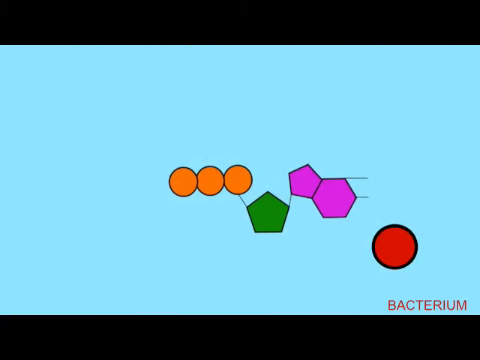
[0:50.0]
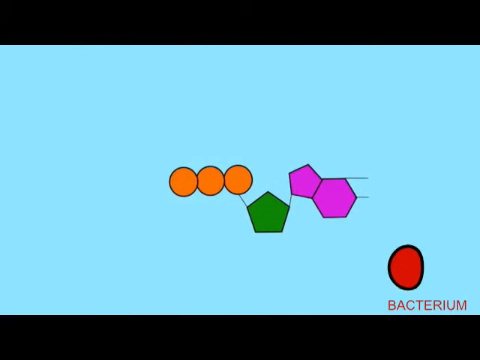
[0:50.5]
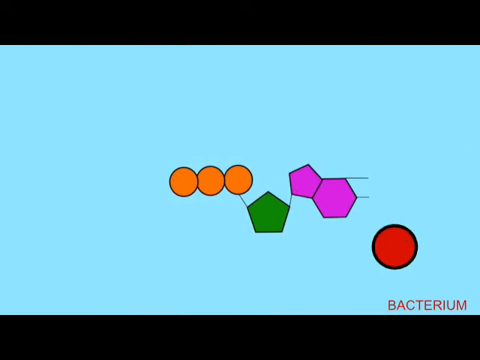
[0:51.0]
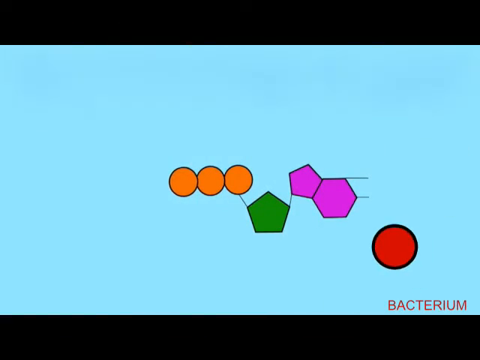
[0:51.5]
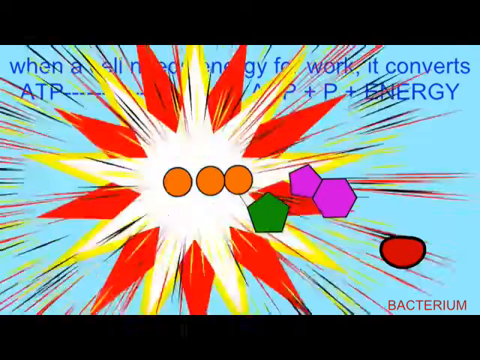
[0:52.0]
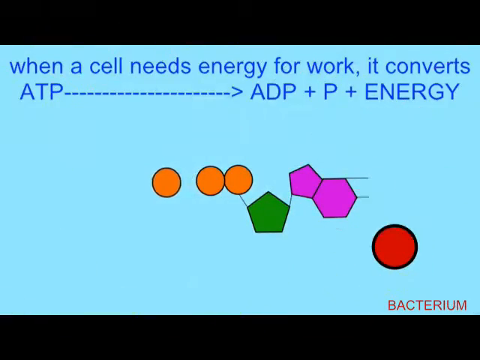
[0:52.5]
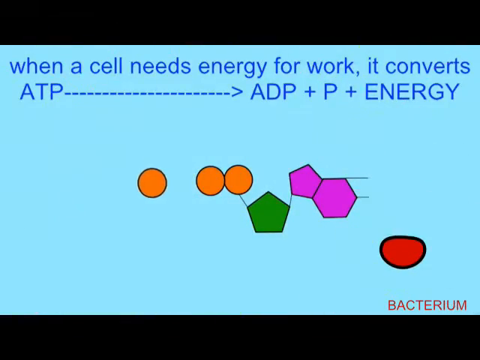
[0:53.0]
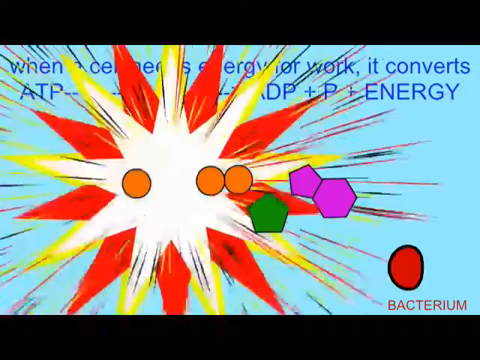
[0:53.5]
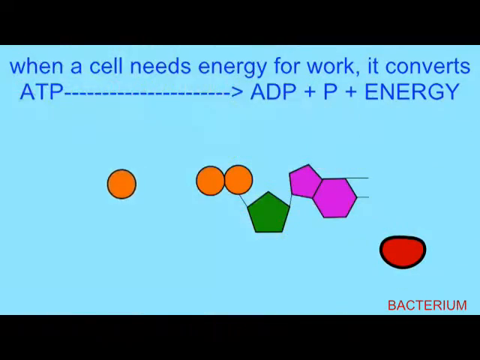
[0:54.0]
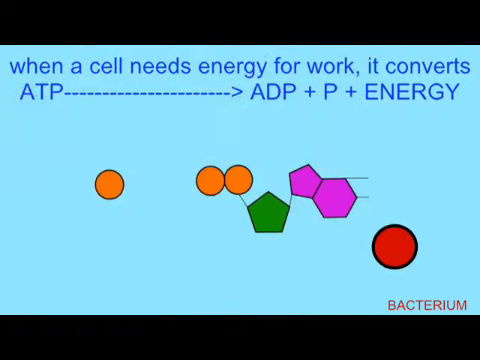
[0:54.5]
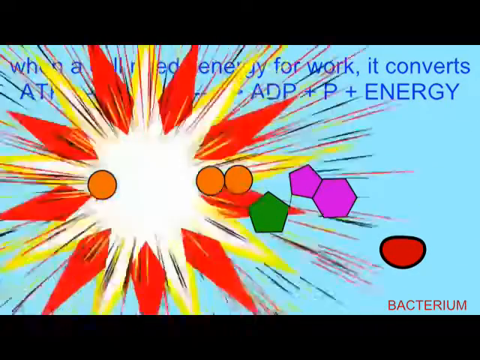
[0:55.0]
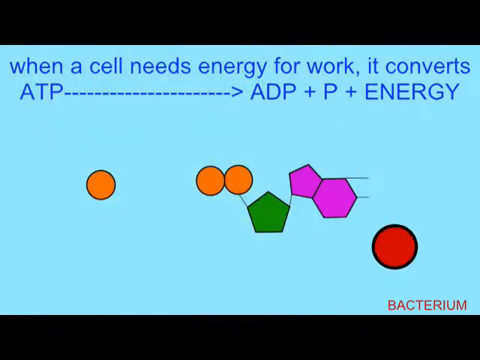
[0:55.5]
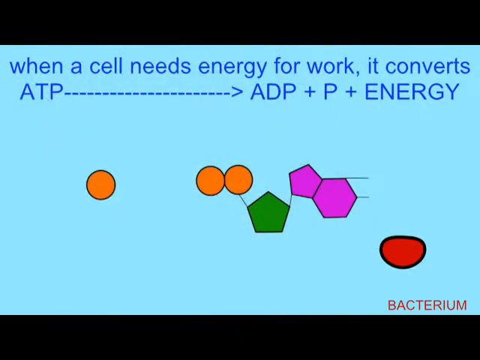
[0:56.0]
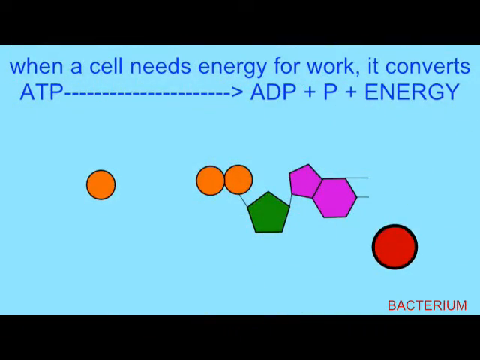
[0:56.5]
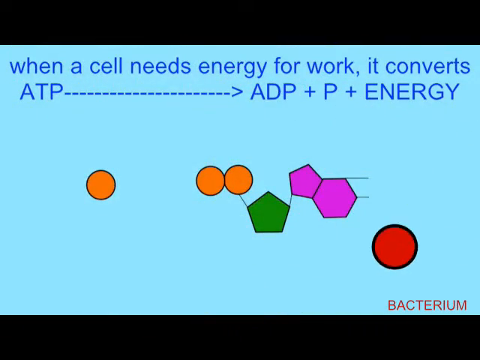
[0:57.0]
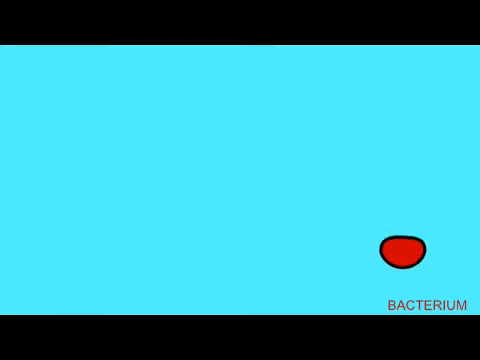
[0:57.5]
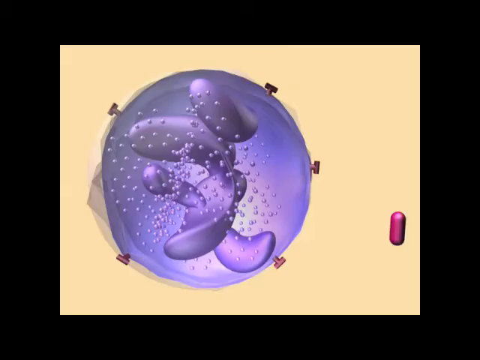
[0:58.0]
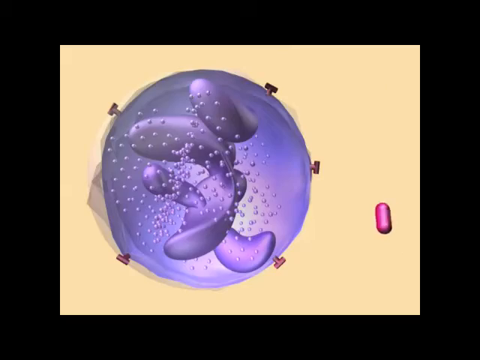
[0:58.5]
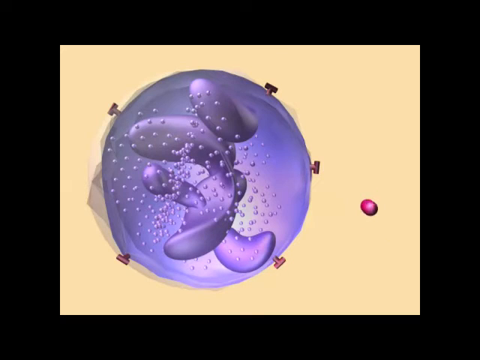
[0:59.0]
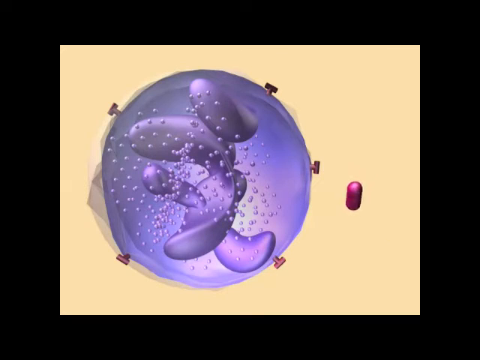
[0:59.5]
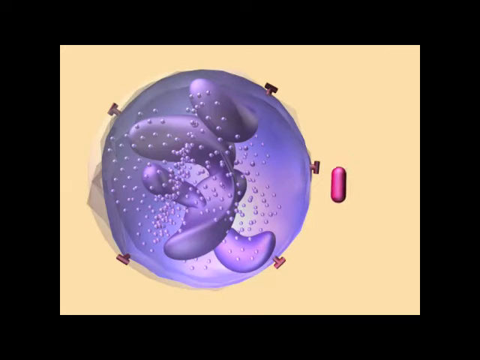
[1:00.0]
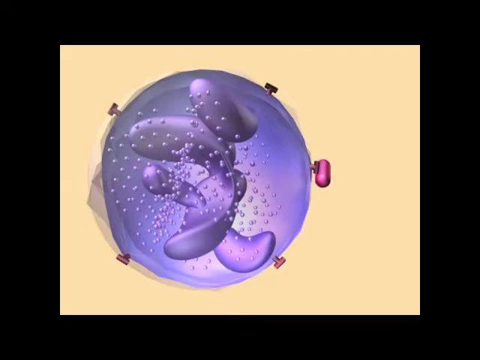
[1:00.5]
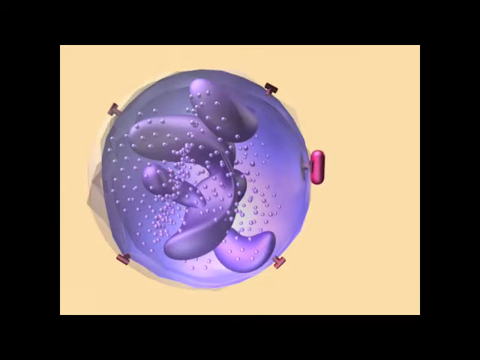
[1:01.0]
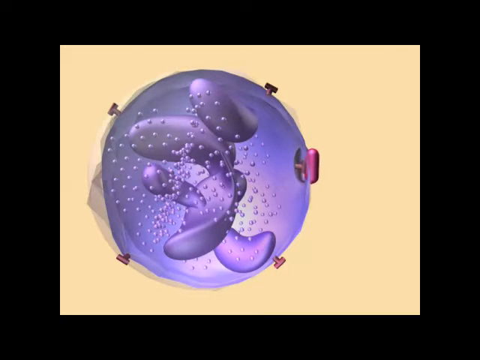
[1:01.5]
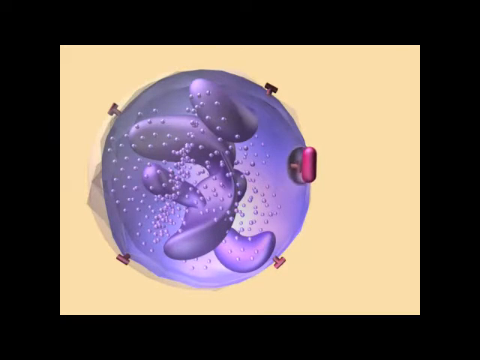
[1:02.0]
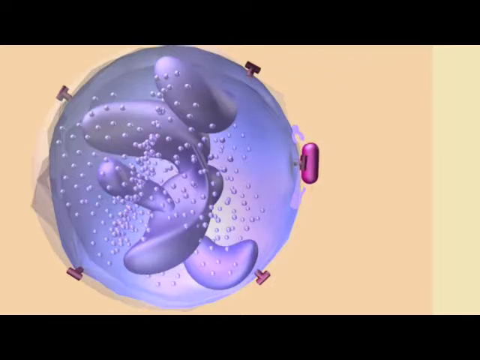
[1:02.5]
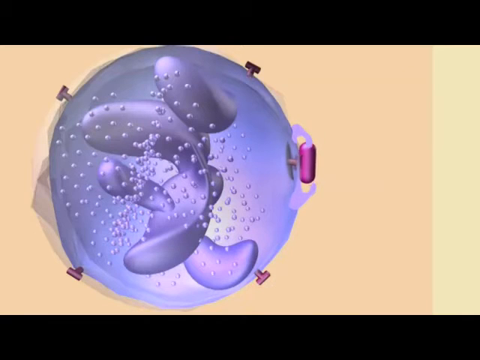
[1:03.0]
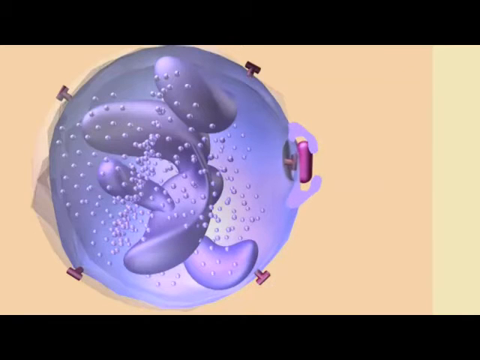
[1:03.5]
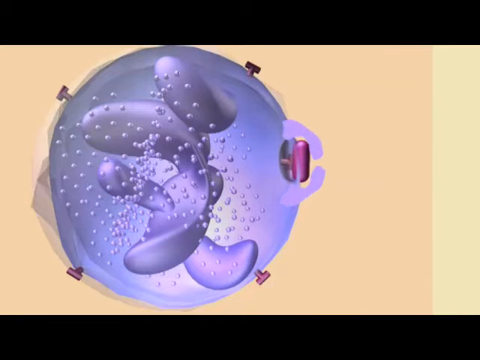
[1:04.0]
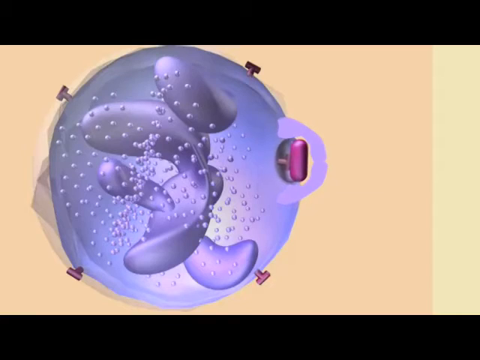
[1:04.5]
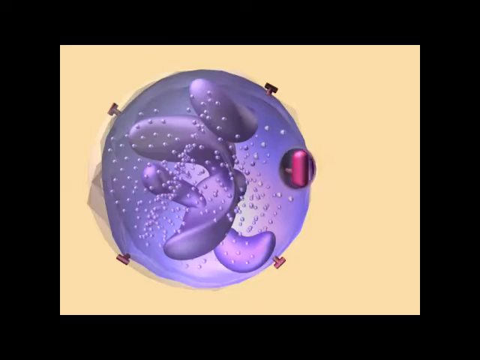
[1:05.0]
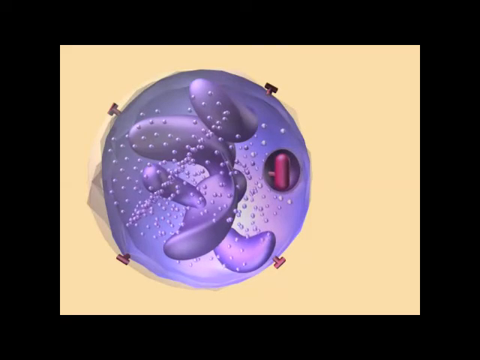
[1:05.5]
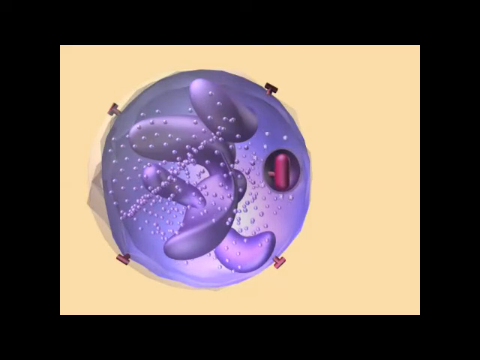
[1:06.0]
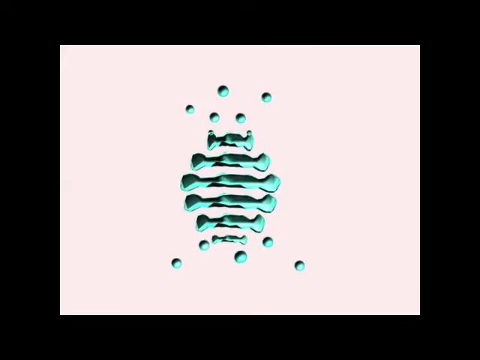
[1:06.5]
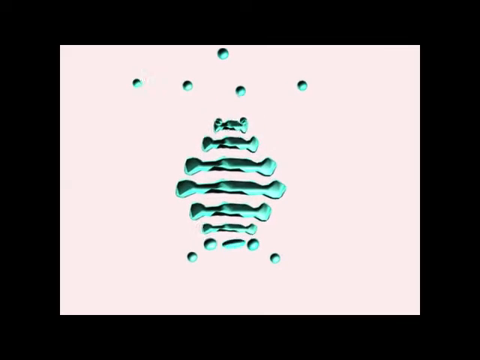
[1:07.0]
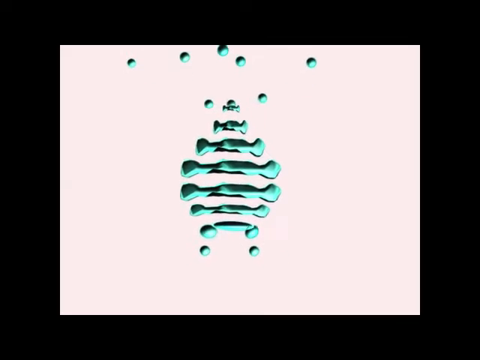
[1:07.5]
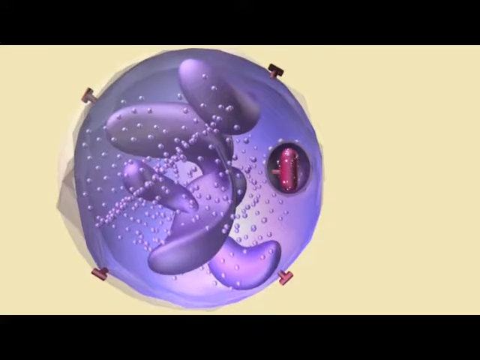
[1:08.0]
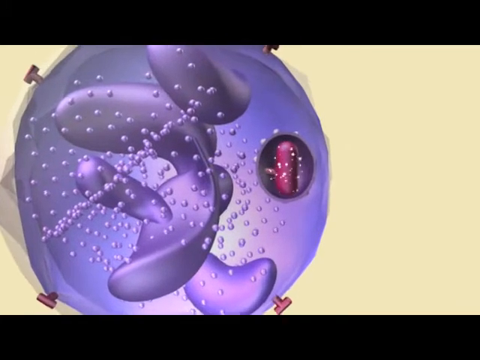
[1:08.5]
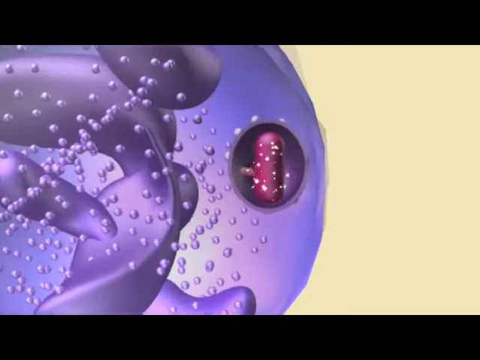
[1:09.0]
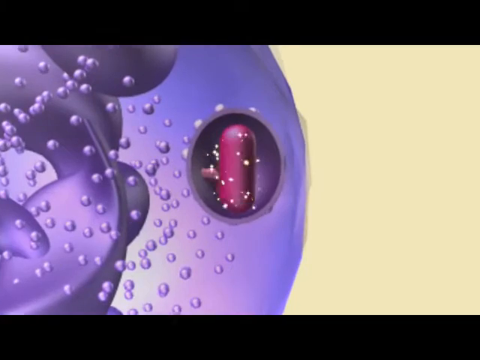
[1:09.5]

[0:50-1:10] In the center is the green house-shaped outline with its peak pointing up. Up to its left are three orange circles touching each other. To its right is a five-sided, house-like purple outline with its peak going up to the left, and below that is a six-sided purple shape. Down to the right of that is a red circle with a black border, and beneath it in the right corner is the word "bacterium". The red circle keeps pulsating, going flat on top, stretching out a little on the bottom and snapping back into a circle. The orange circle on the left separates from the other two and moves back to the left. Blue text across the top reads "when a cell needs energy for work, it converts ATP", followed by a row of small dashes, an arrow, and "ADP, plus P, plus energy", and the comic-book Kapow bursts pop up whenever the orange circle moves. The video then cuts to a tan background. On the left is a big bluish-purple globule, a circle with kind of little screws sticking out: one up to the left, one up to the right, one to the right, one down to the right and one down to the left. Inside it are small and big bubbles, almost kind of like the inside of a lava lamp. From the right, a single red blood cell comes toward it, flipping in circles, and hits the pin sticking out on the right side, which pushes into it. Blue forms around it and it pops inside the globule. Little green circles come up from the bottom, form a longer tube in the center, and separate into small ones again as they go up to the top. The view returns to the big blue globule and zooms in on the pill inside it on the right side.